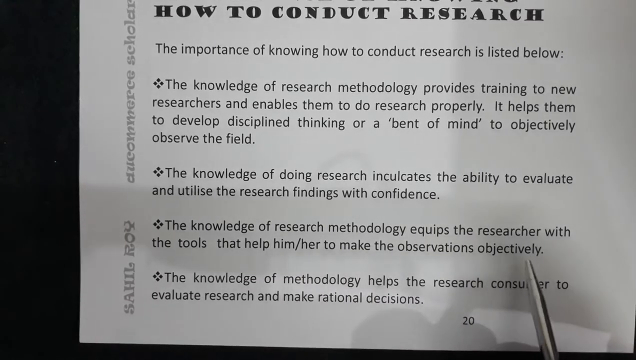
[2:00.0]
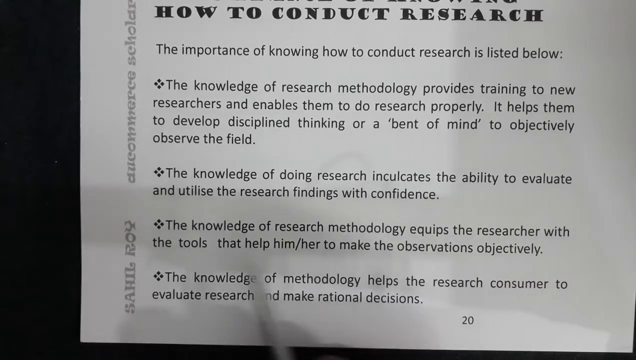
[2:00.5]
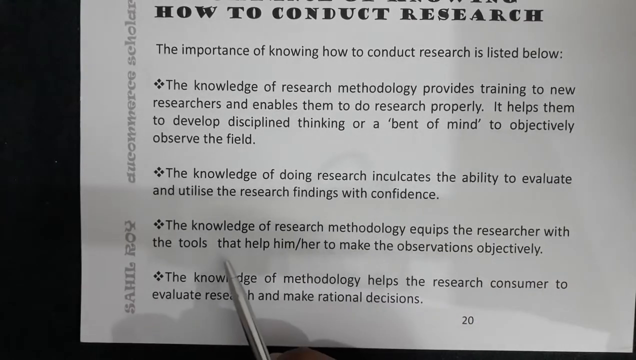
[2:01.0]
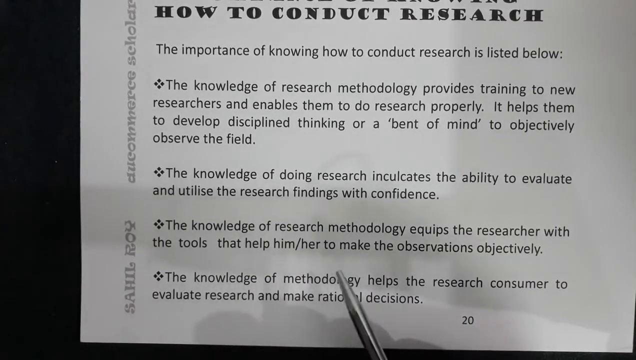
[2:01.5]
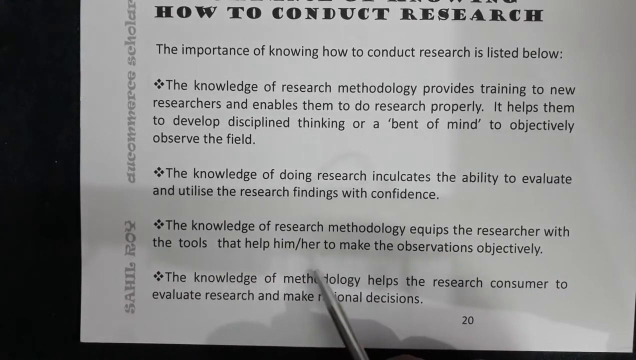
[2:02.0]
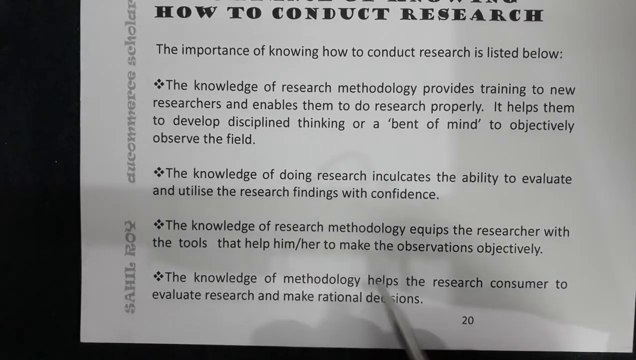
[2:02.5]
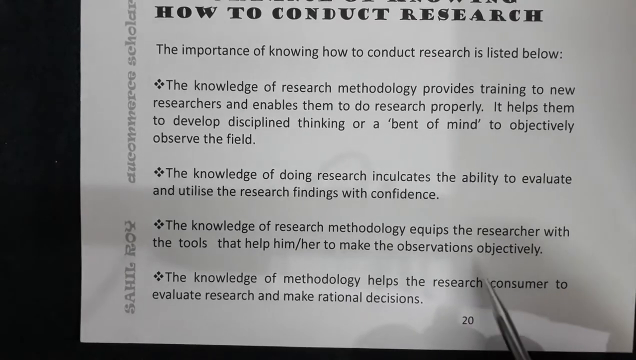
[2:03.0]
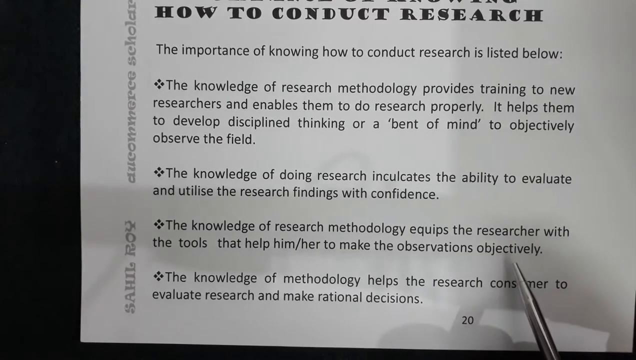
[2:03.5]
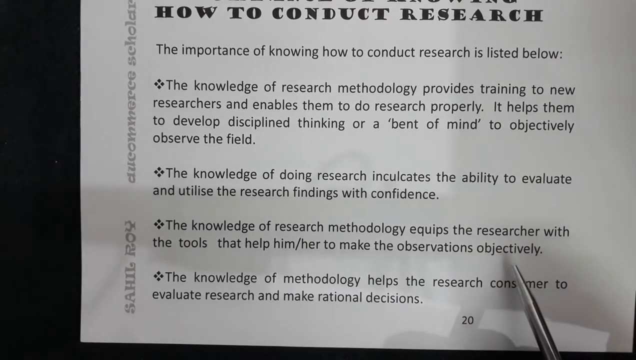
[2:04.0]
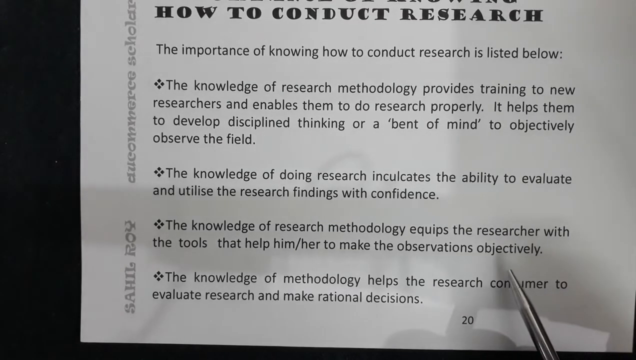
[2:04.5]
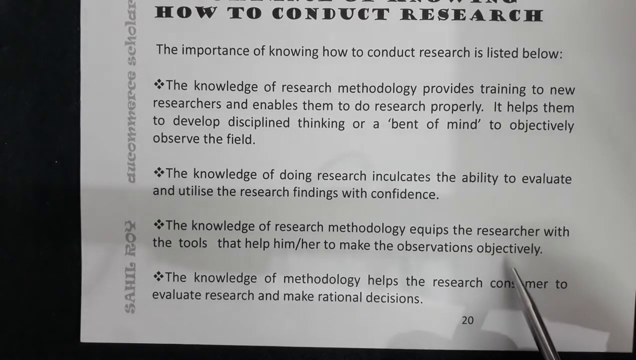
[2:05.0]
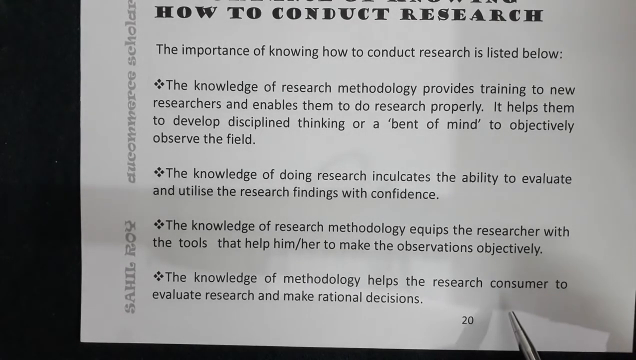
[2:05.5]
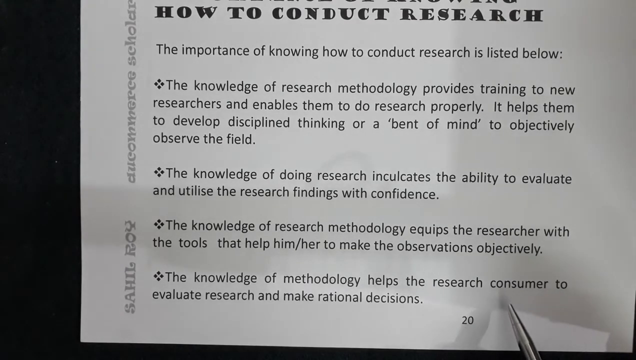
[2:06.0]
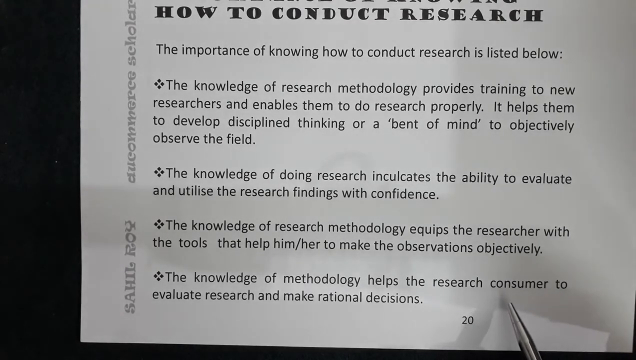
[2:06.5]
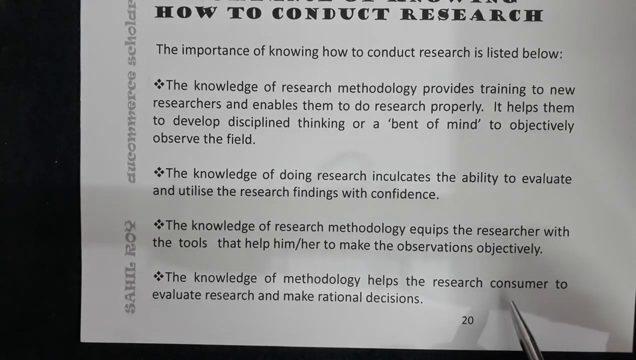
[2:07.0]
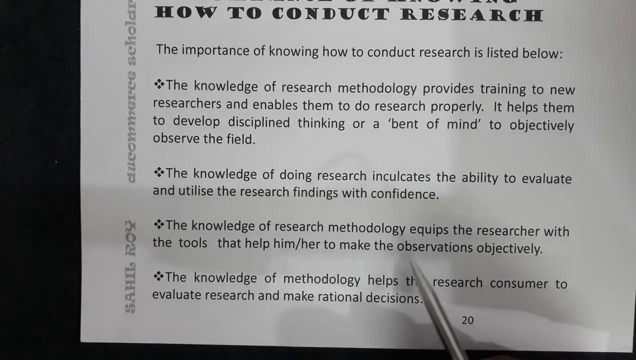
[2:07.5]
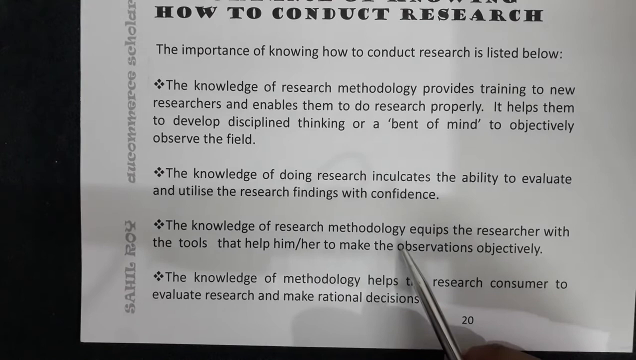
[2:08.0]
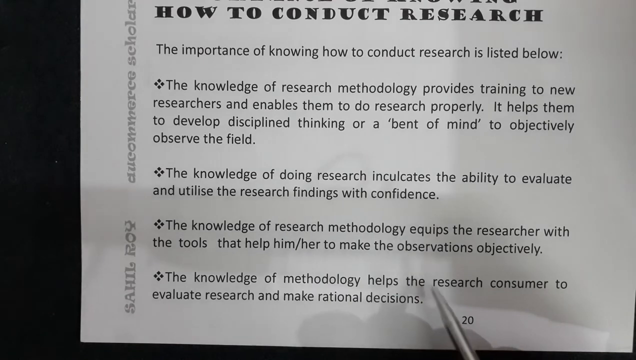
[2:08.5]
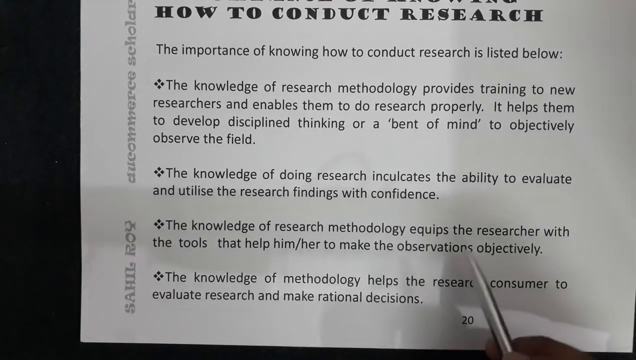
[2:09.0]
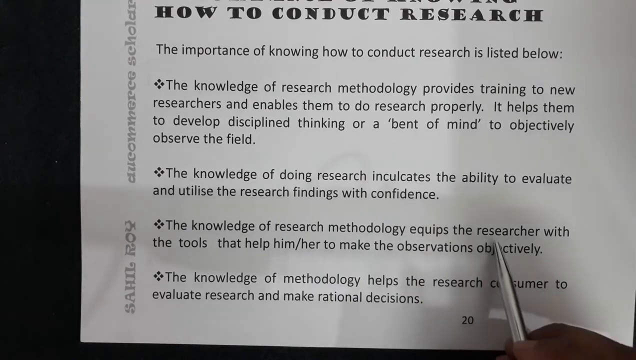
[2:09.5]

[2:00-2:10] A white sheet of paper says "the importance of knowing how to conduct research" in bold at the top, with a bunch of text below, including "Knowledge of research methodology provides training to new researchers, enables them to do research properly, and helps them to develop discipline thinking or a bent of mind to objectively observe the field." A person points out words on the sheet with a silver pen, going down the sheet and pointing to different words as if they are potentially reading it as they go.